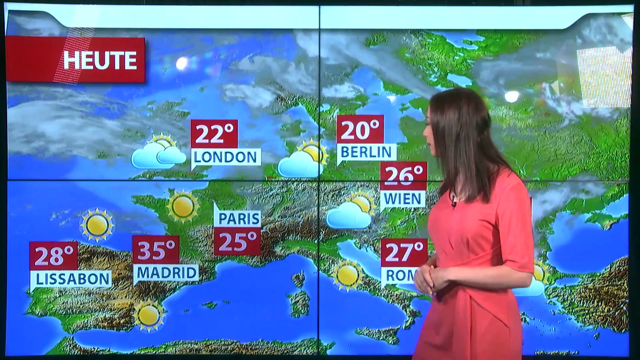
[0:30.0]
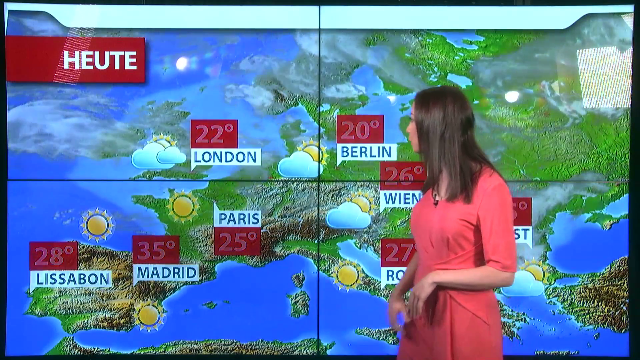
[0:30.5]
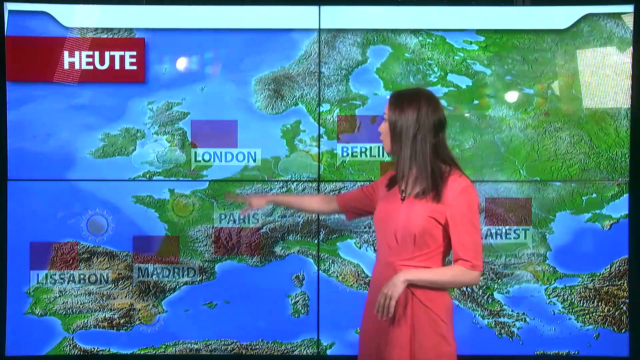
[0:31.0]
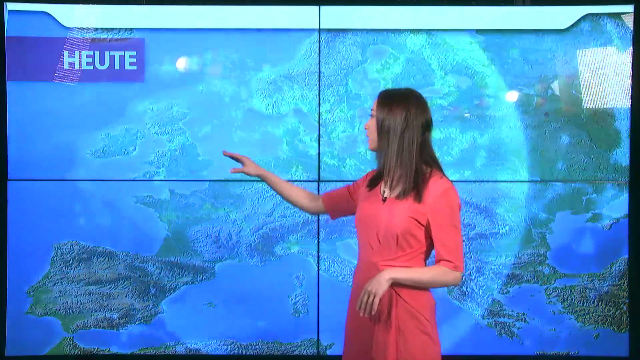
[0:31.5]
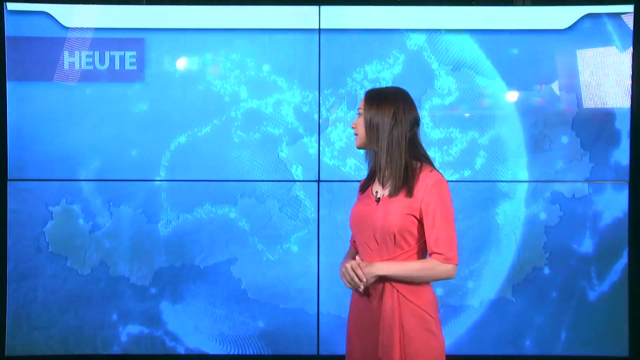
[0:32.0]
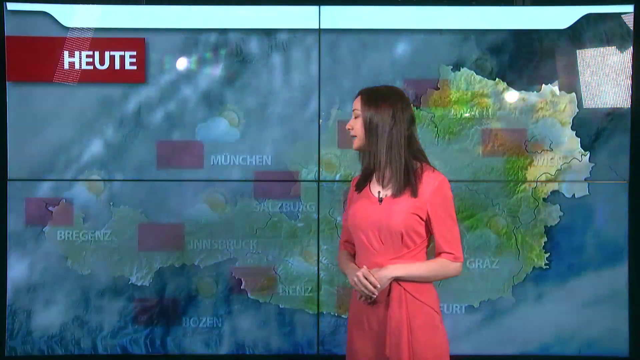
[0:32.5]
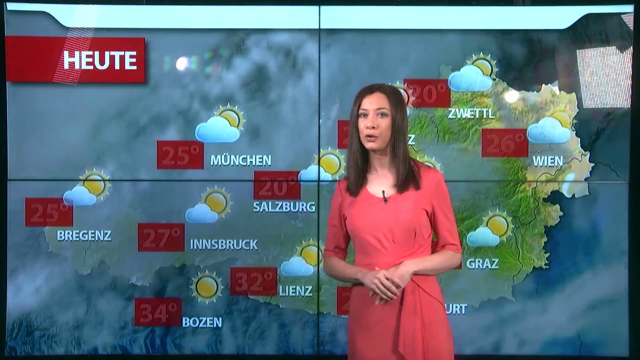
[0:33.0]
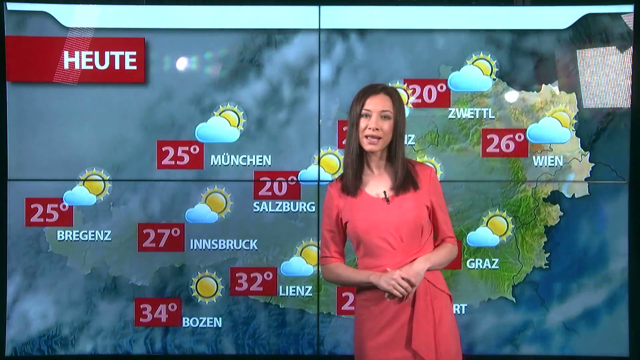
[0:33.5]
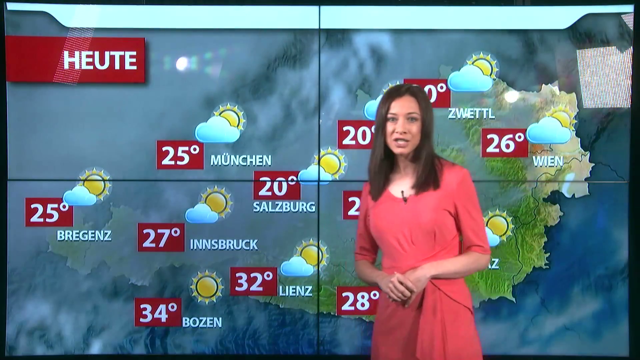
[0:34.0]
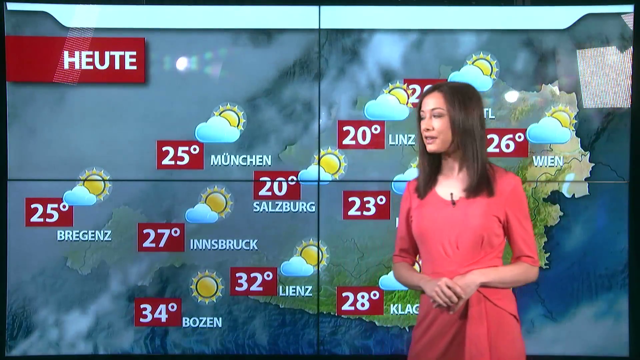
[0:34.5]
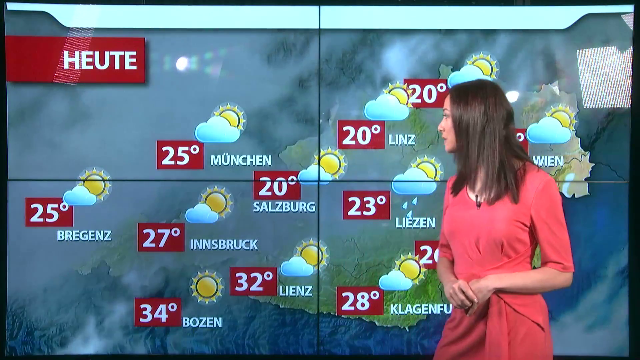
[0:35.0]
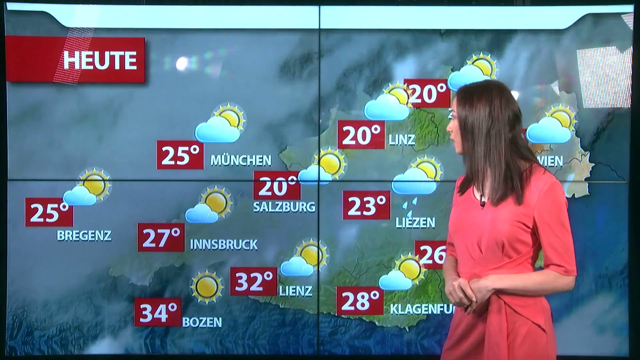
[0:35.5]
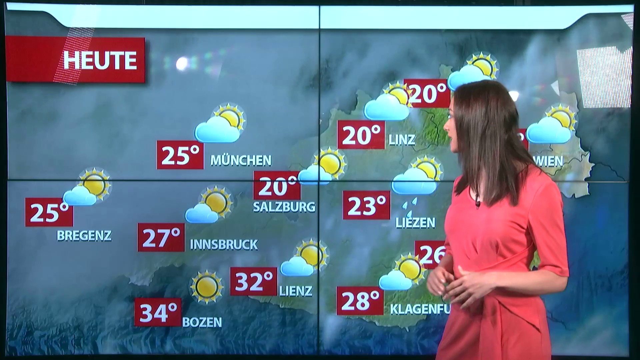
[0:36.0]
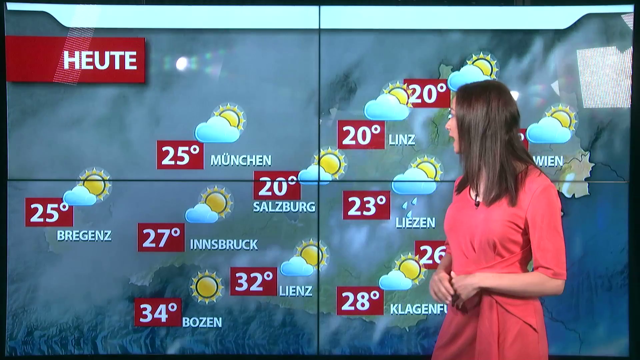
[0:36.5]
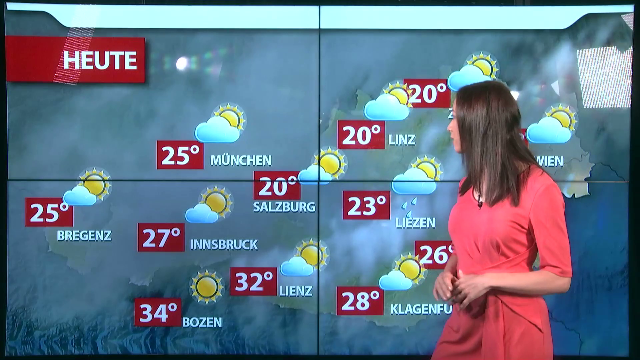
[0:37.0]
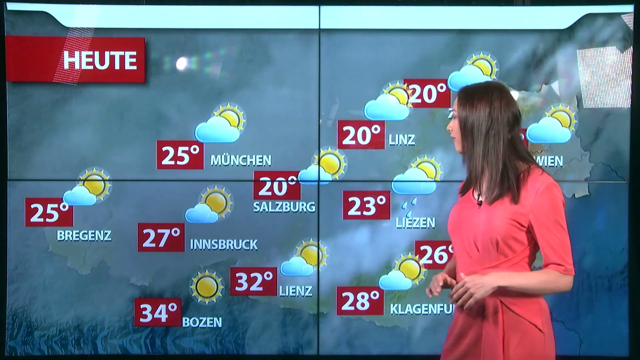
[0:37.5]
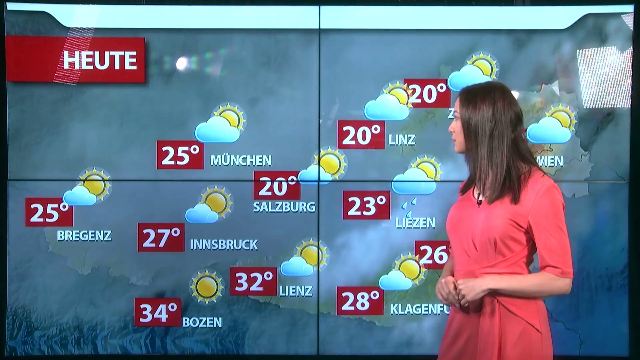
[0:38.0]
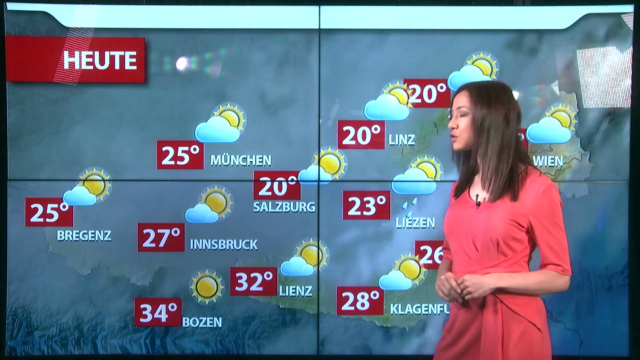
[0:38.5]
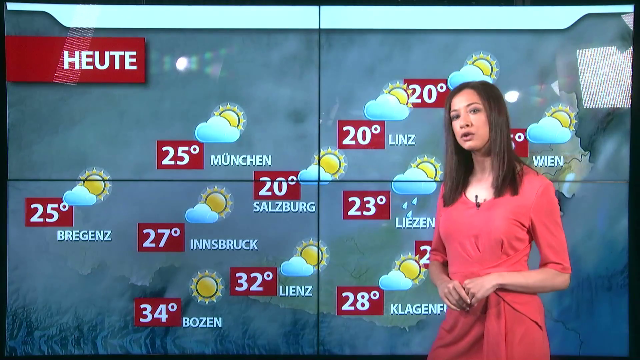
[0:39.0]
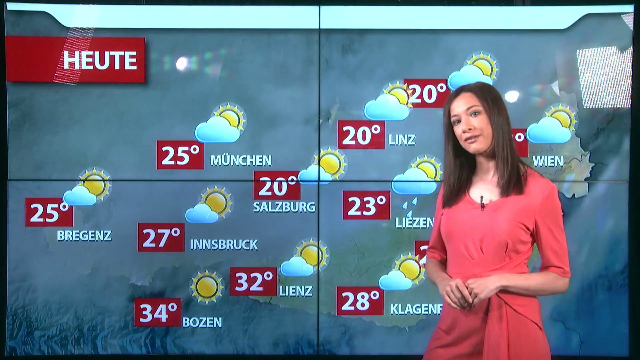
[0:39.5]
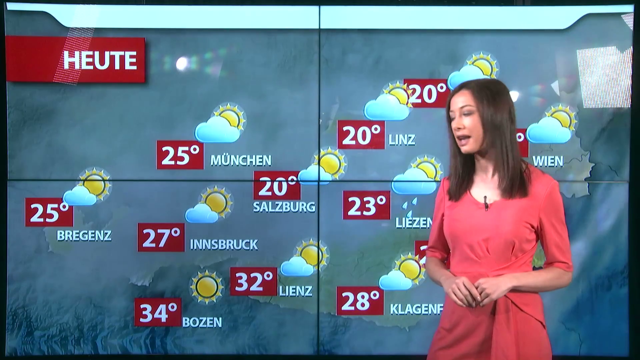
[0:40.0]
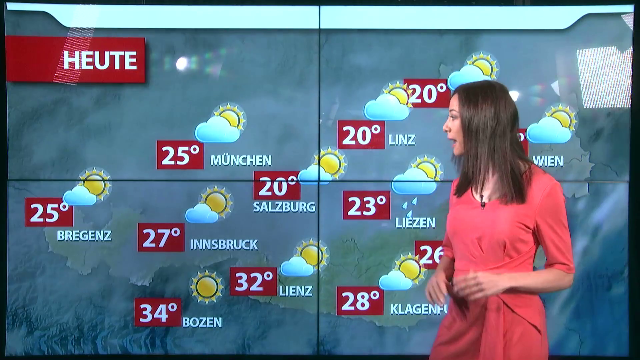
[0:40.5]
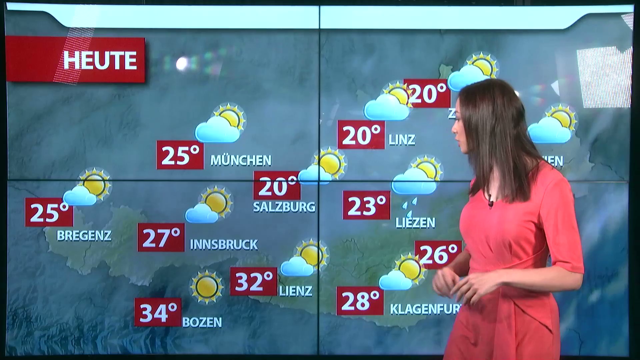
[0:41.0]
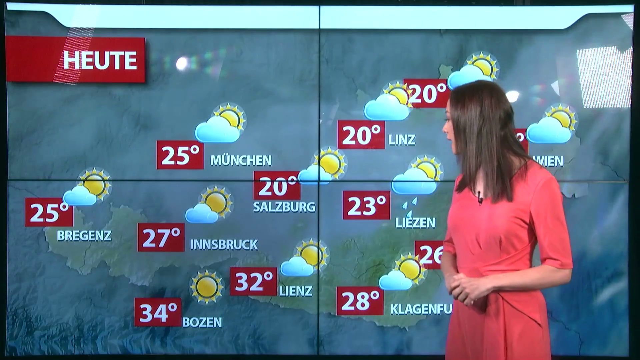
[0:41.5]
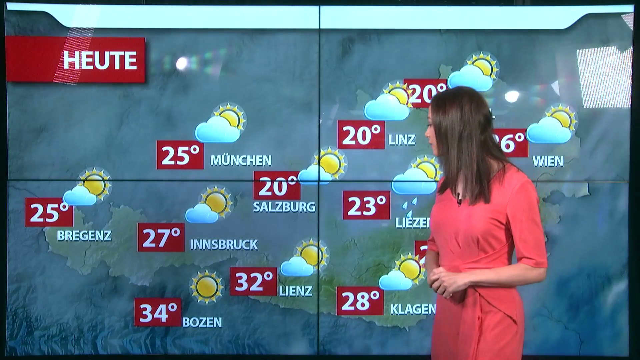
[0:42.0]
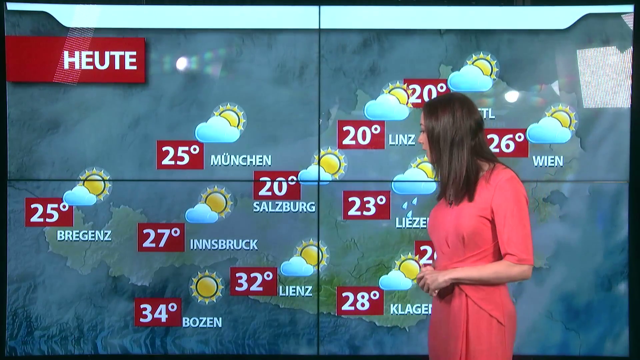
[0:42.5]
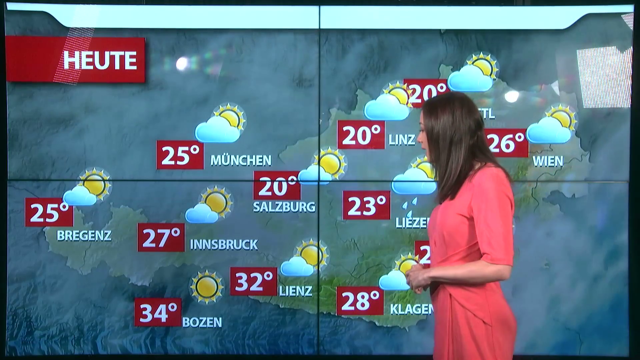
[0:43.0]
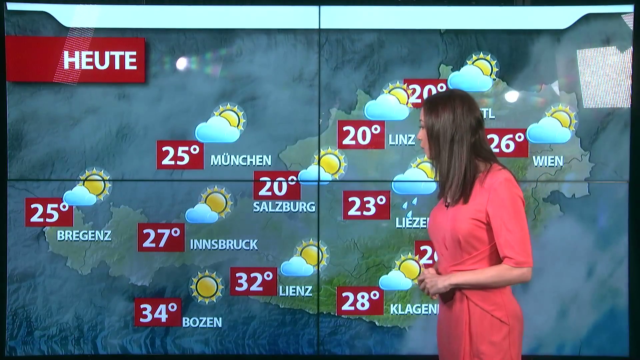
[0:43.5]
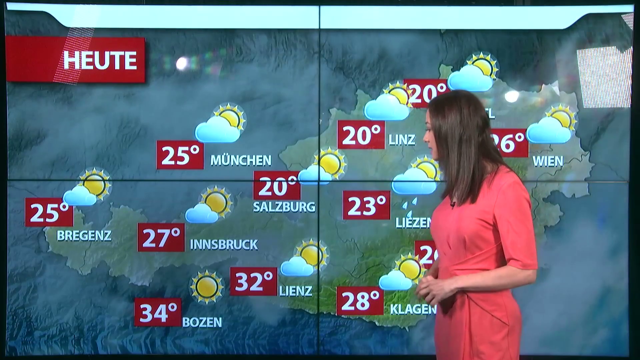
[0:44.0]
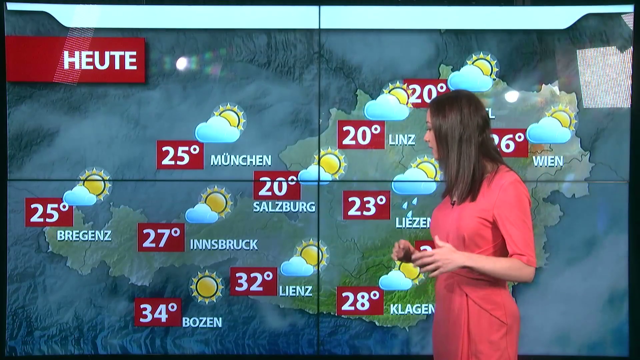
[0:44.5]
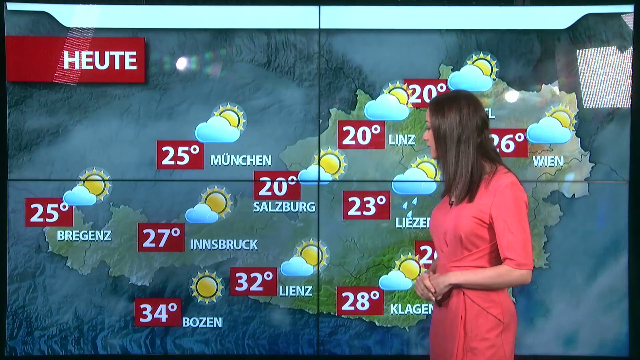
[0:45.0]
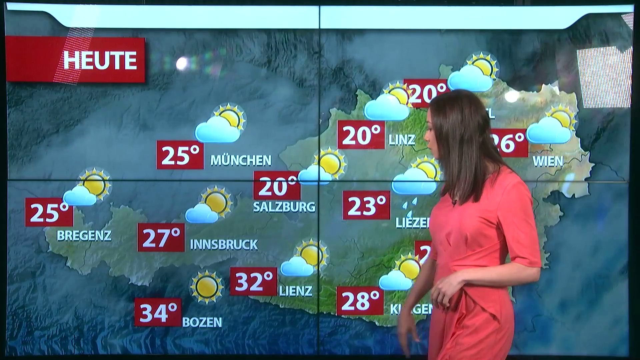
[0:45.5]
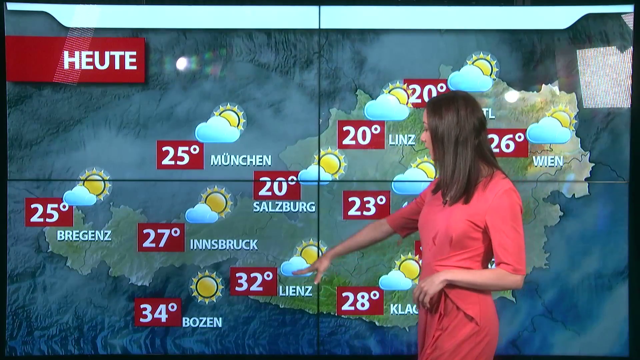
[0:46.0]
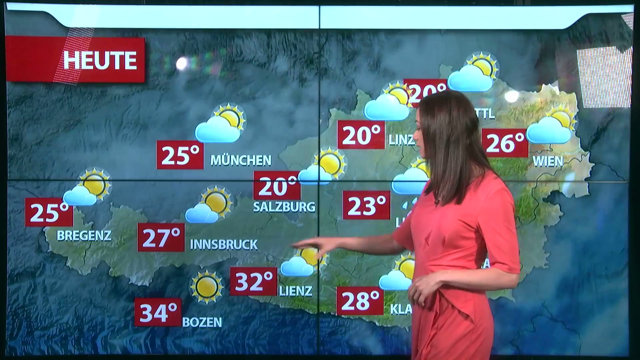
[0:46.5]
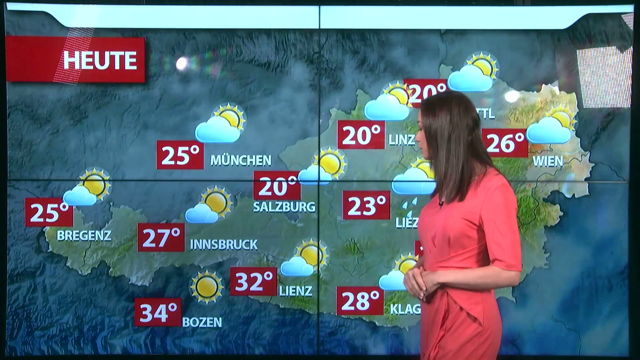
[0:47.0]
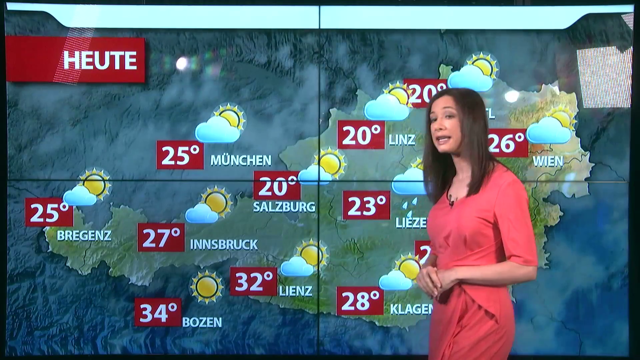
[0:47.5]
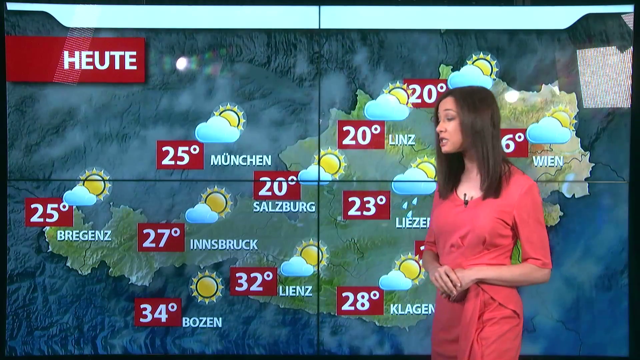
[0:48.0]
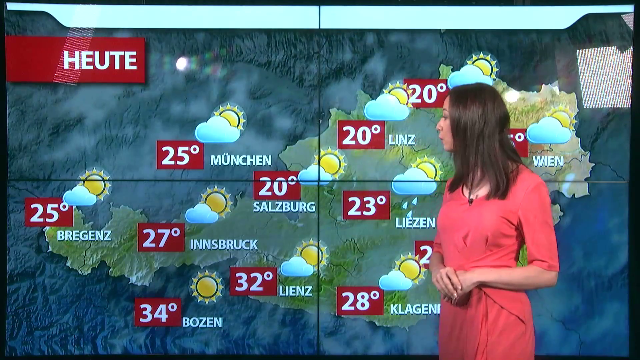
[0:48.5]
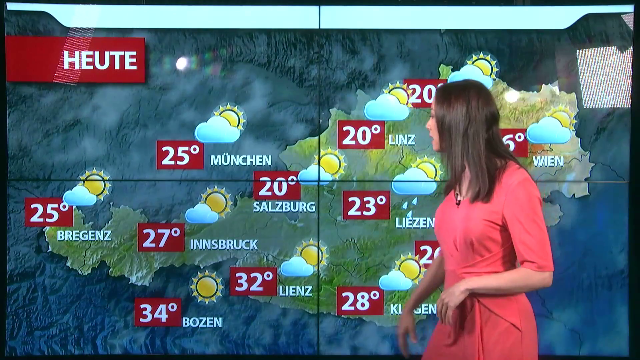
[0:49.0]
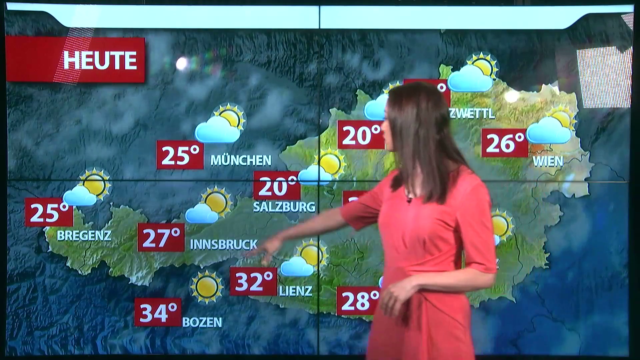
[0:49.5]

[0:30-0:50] The screen changes to show the weather in a different place. Bosnia is 34 degrees Celsius with sunshine, Lienz is 32 degrees and partly cloudy, Innsbruck is 27 degrees and partly cloudy, Bregenz is 25 degrees, München is 25 degrees, Liezen is 23 degrees with scattered thundershowers, Linz is 20 degrees Celsius, and Wien is partly cloudy with 26 degrees Celsius. The map shows a country with a lot of mist covering the green land, and there are hills and mountains around. Unlike maps where a country is surrounded by blue representing the sea, this country is surrounded by mountains and hills.